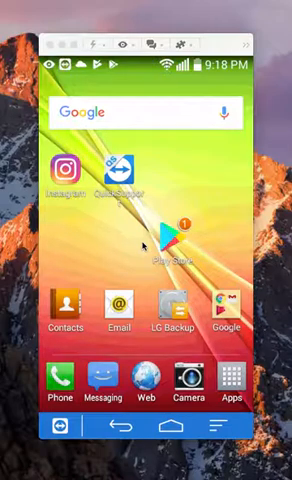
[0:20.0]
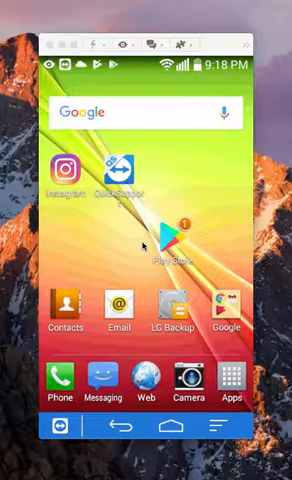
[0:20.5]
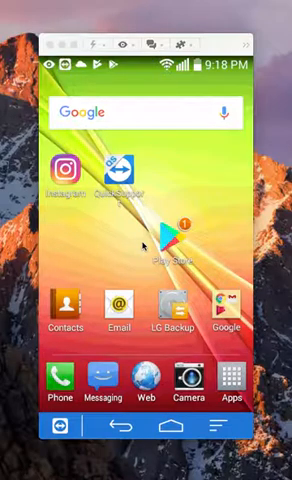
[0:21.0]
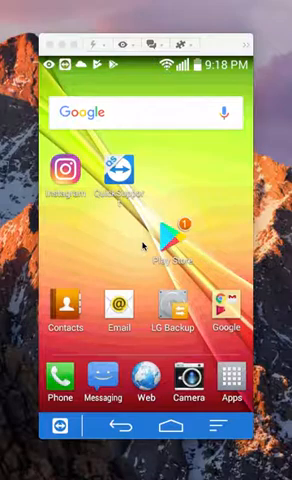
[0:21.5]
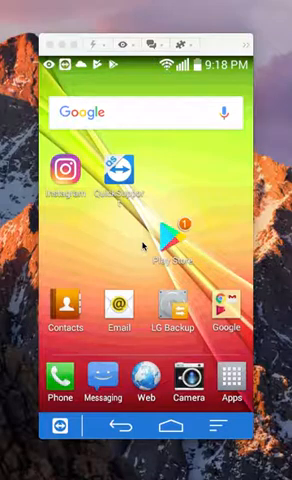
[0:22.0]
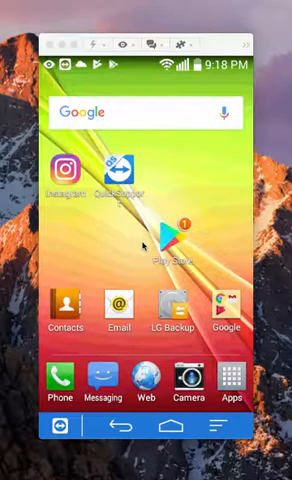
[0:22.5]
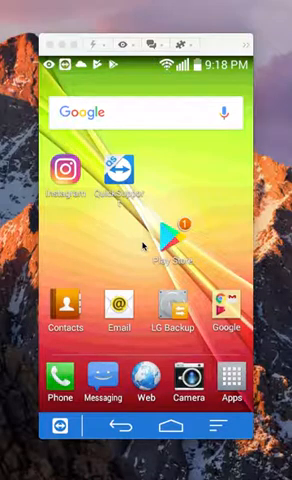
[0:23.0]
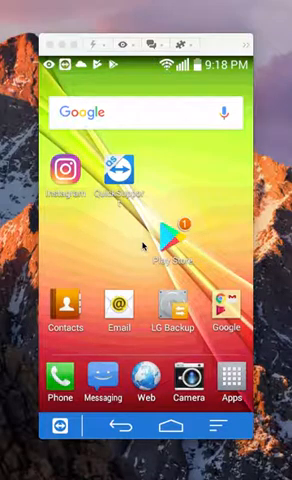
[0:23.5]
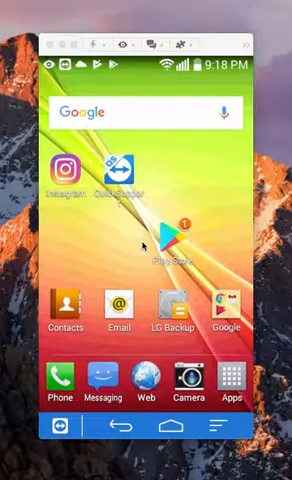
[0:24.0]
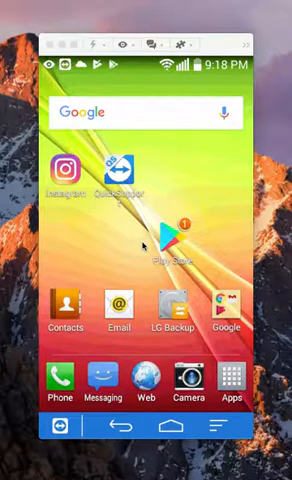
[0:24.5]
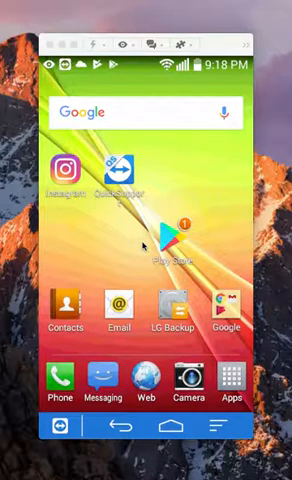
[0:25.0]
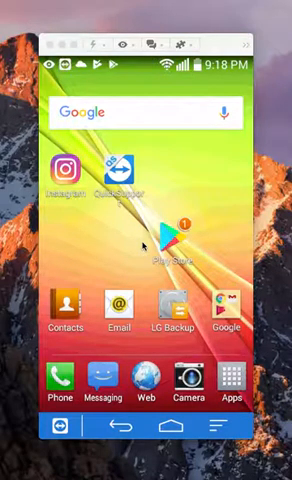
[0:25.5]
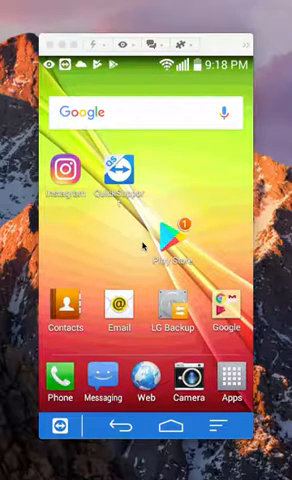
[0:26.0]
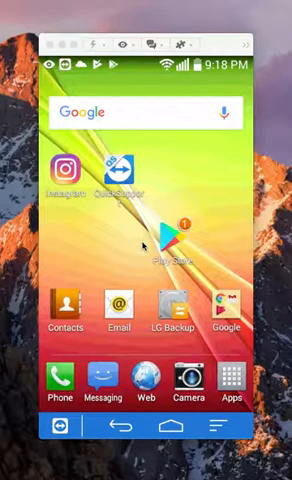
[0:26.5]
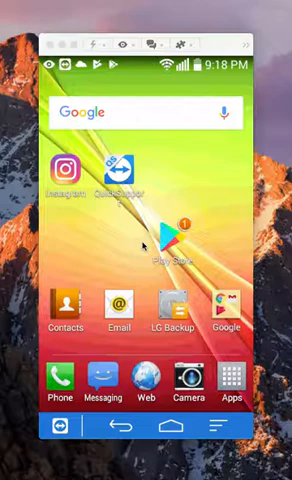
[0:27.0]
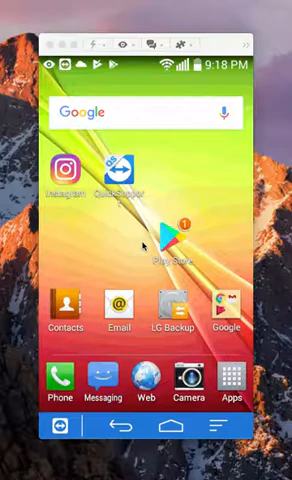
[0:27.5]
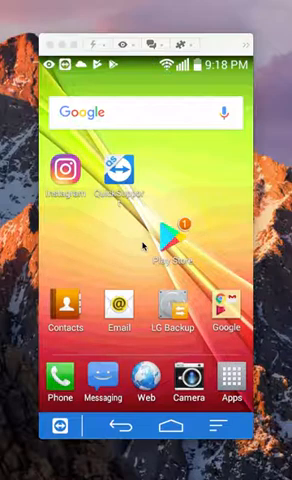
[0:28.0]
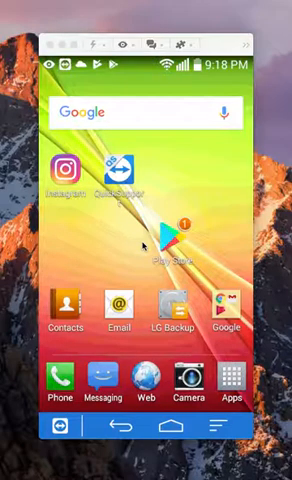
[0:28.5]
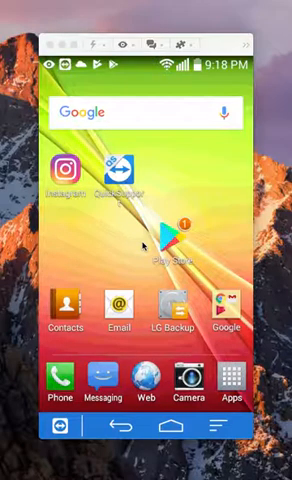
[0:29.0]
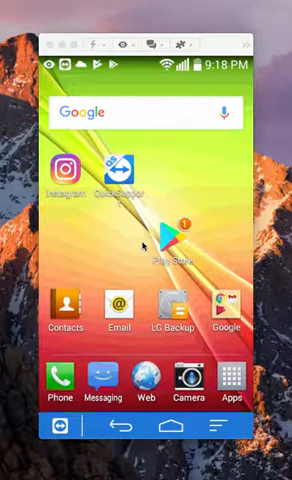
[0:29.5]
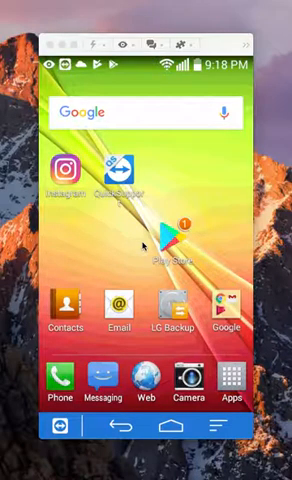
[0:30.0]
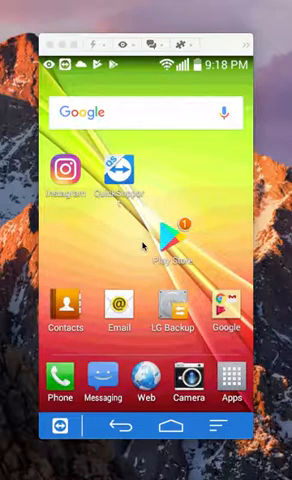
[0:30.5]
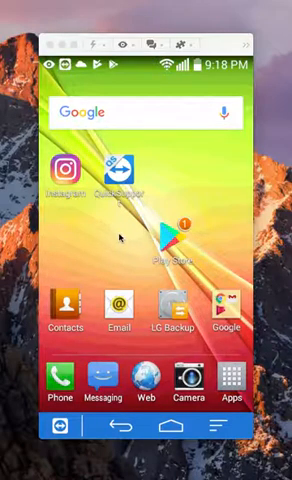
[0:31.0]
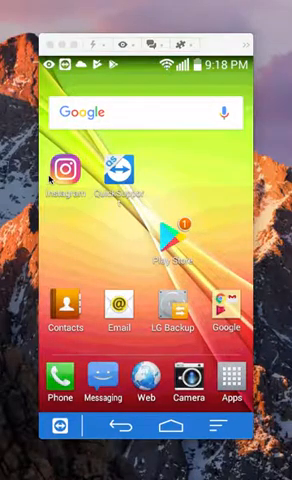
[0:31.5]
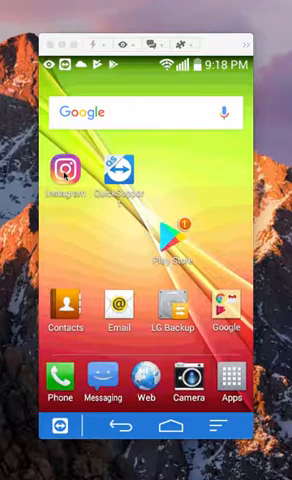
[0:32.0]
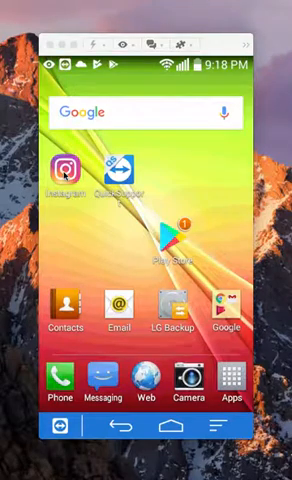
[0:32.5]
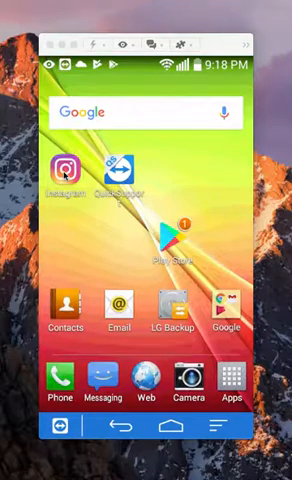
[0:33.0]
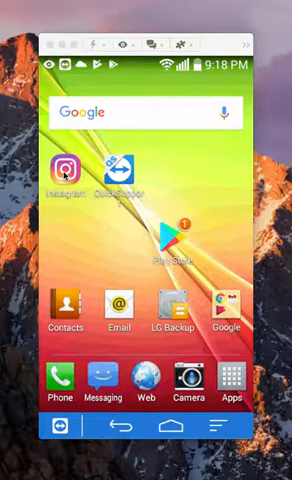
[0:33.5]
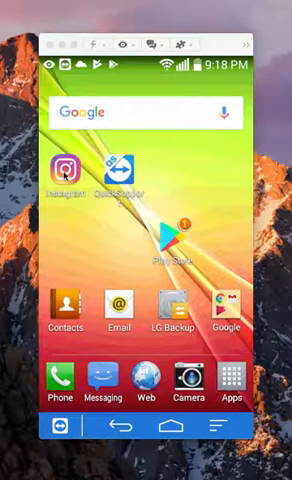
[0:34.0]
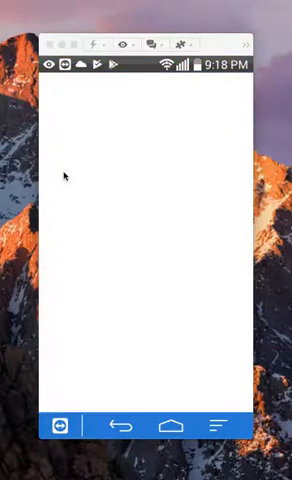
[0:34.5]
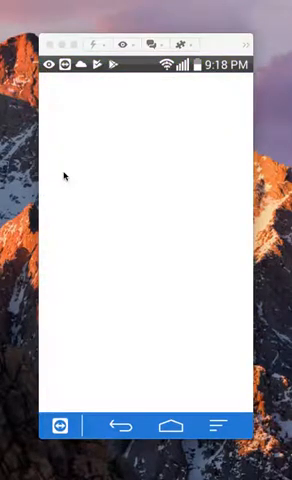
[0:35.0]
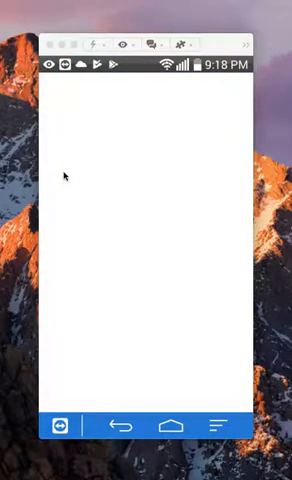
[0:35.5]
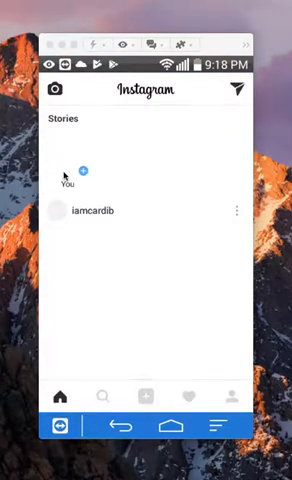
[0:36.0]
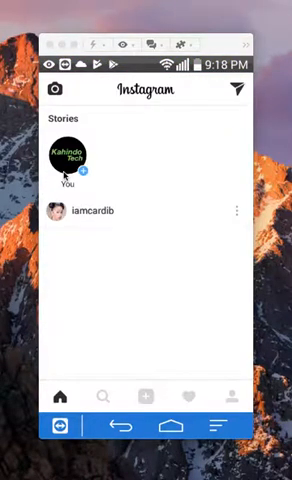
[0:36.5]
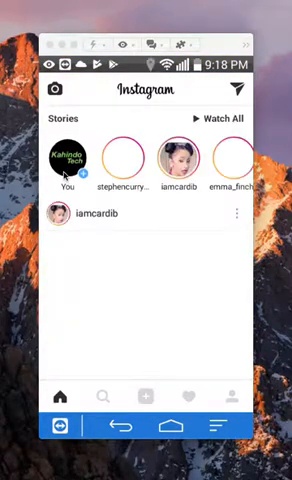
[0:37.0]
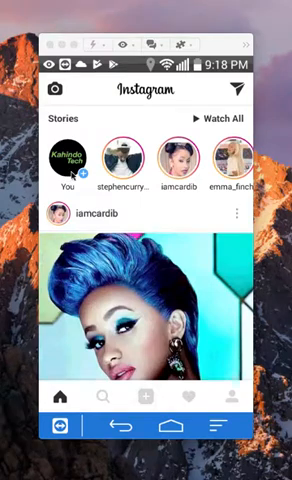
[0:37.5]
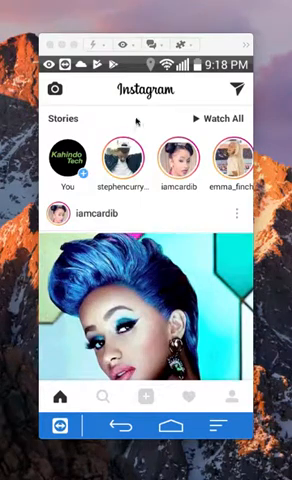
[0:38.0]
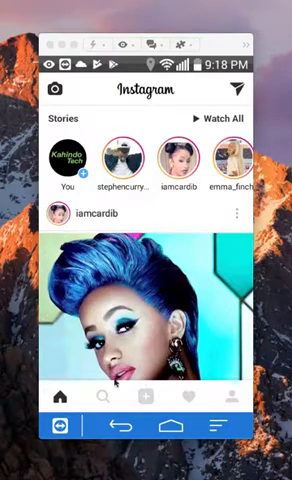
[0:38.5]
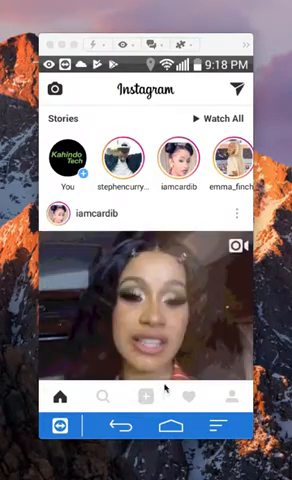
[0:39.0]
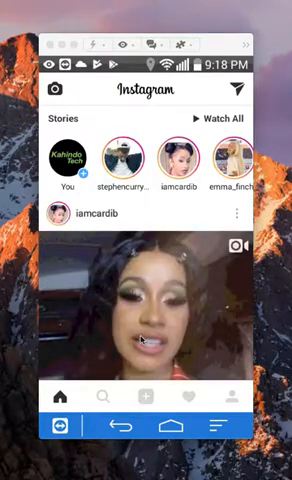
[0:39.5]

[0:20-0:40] The cell phone screen has a green background at the top that hues into yellow and then into a gradually deeper red at the bottom, and the background turns blue. The Wi-Fi signal strength, cell phone signal strength, battery meter and a time display are visible. There is a Google search box with a Google logo and a microphone inside, and multiple icons including Instagram, Play Store, Contacts, Email, LG Backup, Google, Phone, Messaging, Web, Camera and Apps, plus a Home button and a Back arrow button. The background is a snow-covered mountain range with the sky above it. The Instagram icon is selected and an Instagram page comes up showing stories and a watch all option, with names of people under images: Stephen Curry, I am Cardi B and Emma Finch. I am Cardi B is selected, showing an image of her with blue hair and blue eye shadow, wearing one large earring, against a multicolored background with thick black lines. The image then shifts to a video of Cardi B, with a camera icon indicating that it is a video. The phone then returns to the home screen.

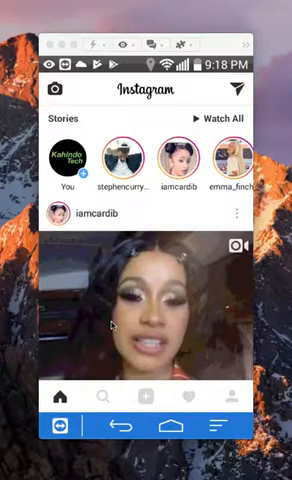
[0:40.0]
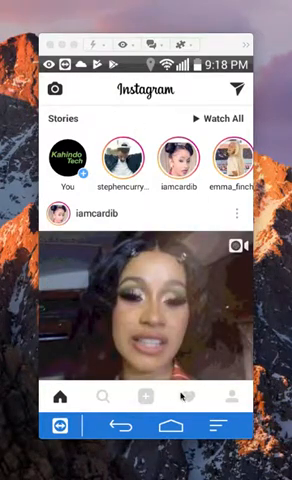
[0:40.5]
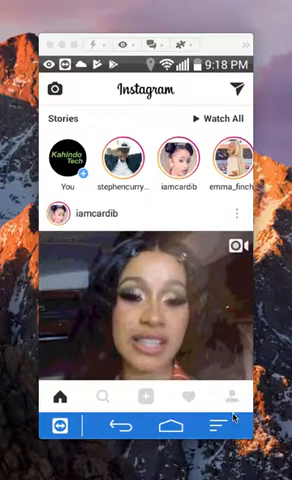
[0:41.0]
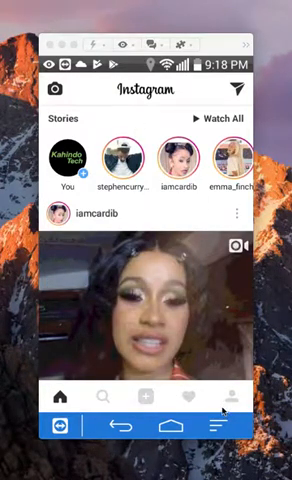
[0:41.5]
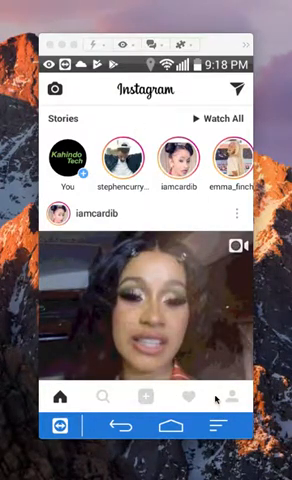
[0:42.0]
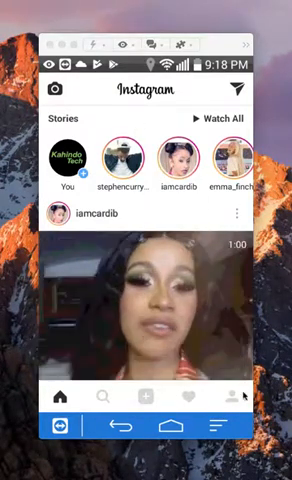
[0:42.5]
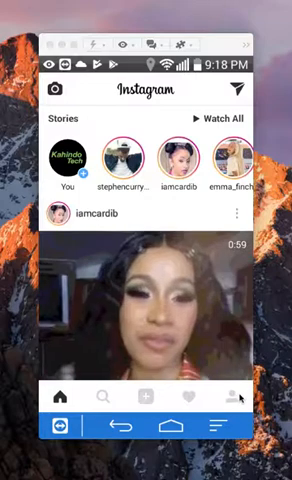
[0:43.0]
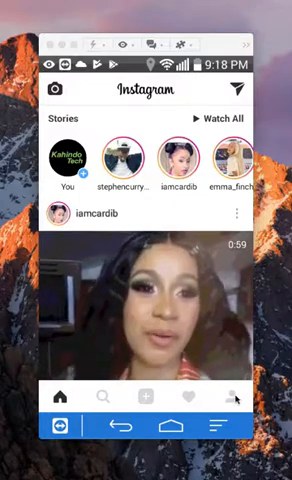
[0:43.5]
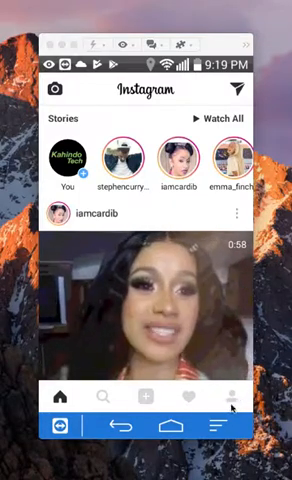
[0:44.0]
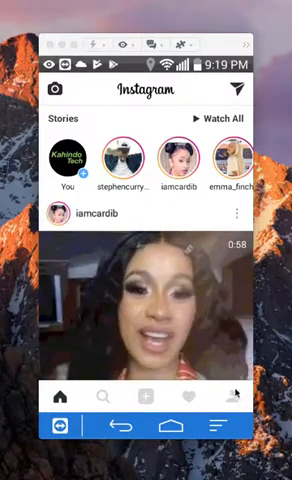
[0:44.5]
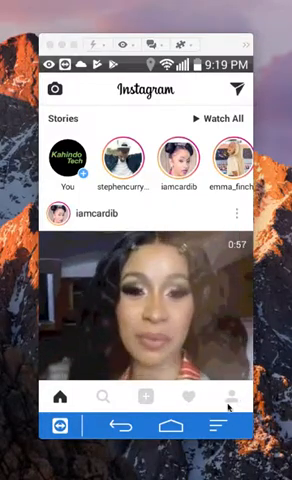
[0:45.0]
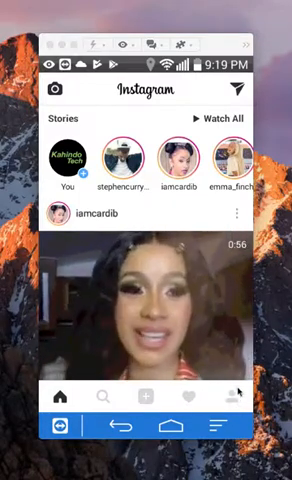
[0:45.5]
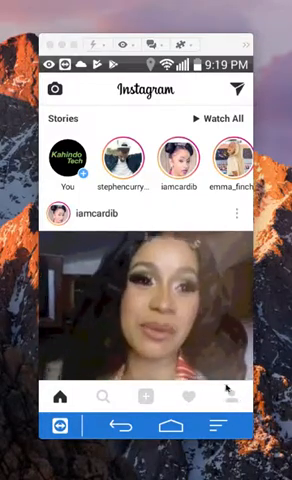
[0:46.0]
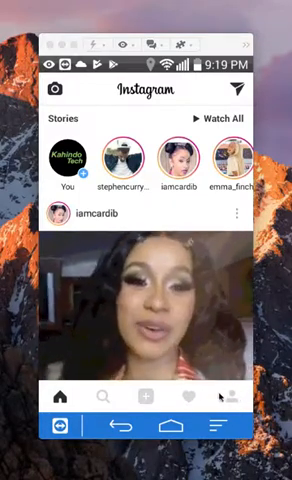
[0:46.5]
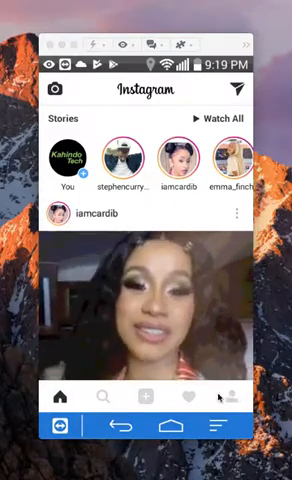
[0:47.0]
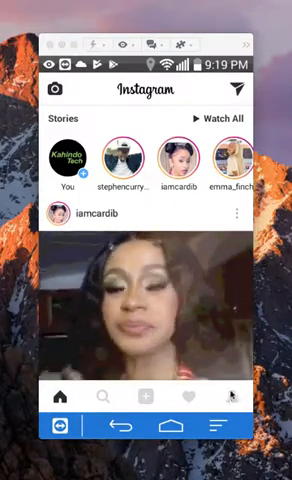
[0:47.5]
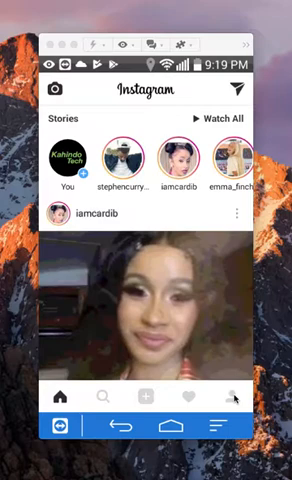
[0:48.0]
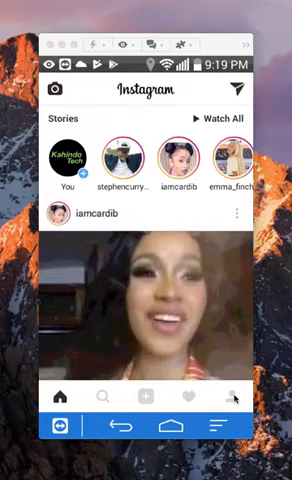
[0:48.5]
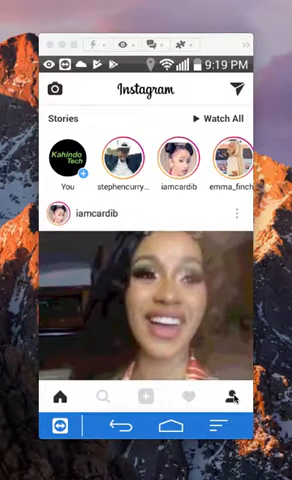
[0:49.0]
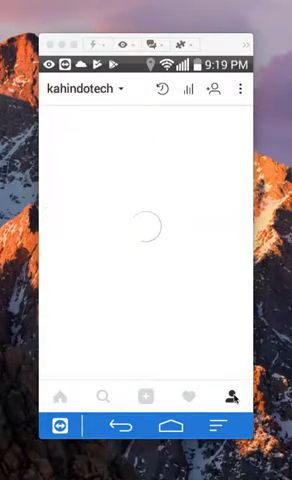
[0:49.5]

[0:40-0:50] The Instagram app is open on the cell phone, showing multiple stories: Stephen Curry, the phone owner's own story, I am Cardi B and Emma Finch. Below those images and names, I am Cardi B is shown, with a video of Cardi B and a one-minute timer that begins when play is selected. The cursor then draws attention to the icons at the bottom of the screen: a home icon, a search icon, a plus icon, a heart icon and a person. The little person is selected, and it turns from opaque to black.